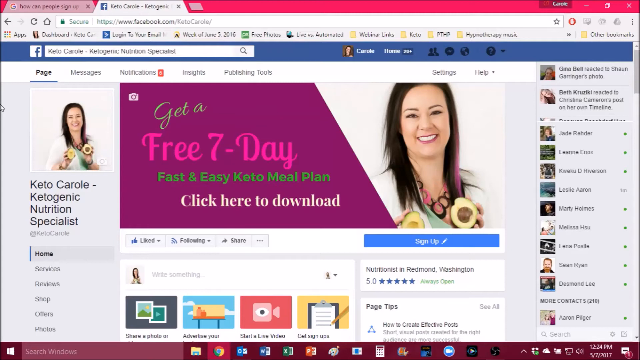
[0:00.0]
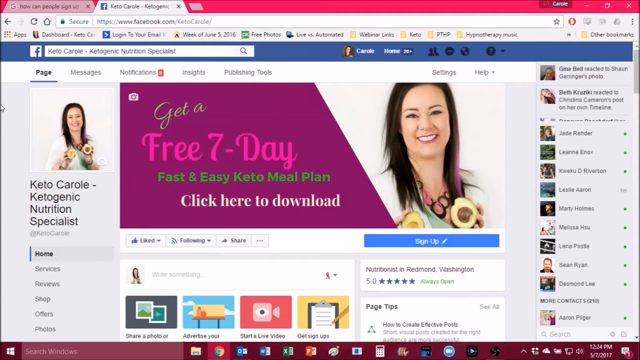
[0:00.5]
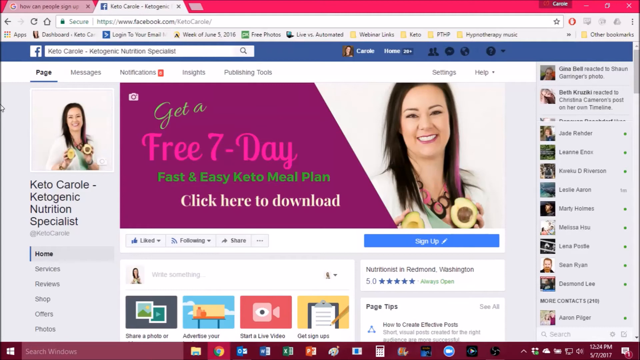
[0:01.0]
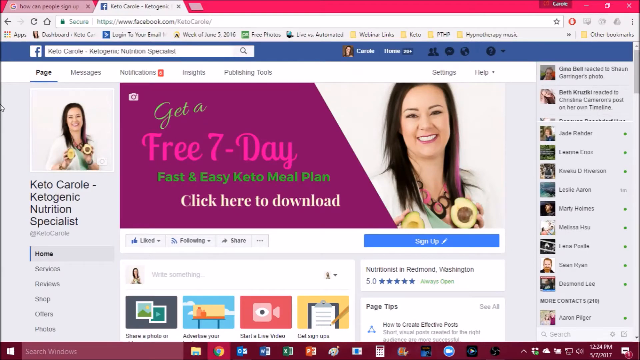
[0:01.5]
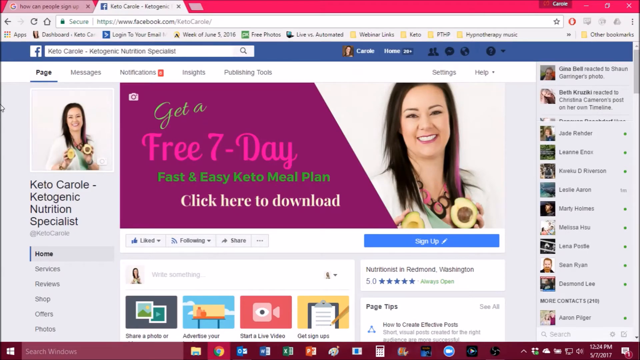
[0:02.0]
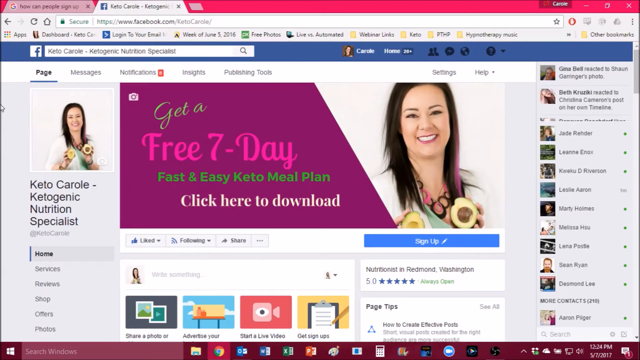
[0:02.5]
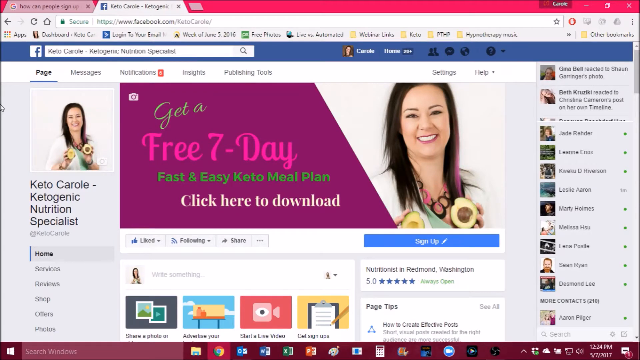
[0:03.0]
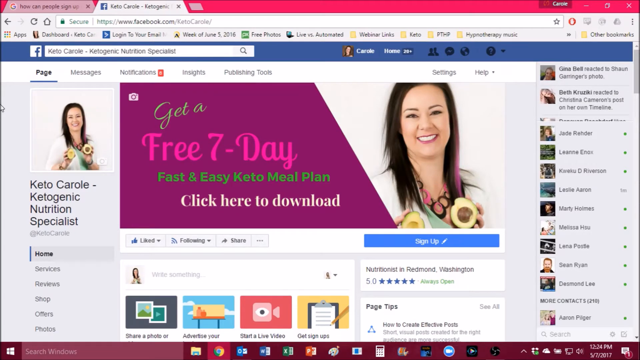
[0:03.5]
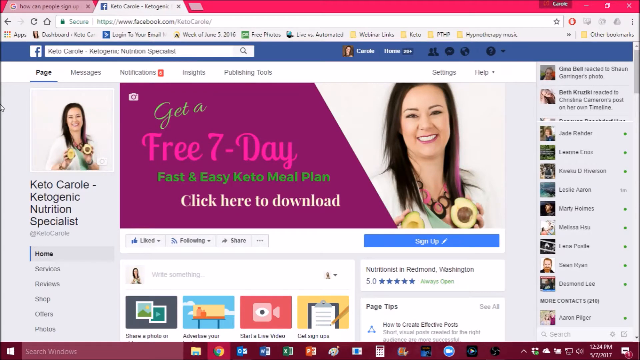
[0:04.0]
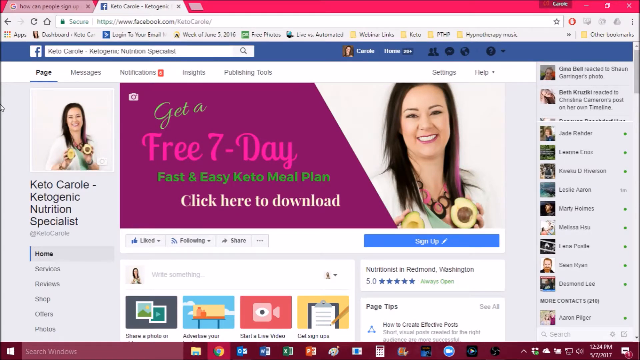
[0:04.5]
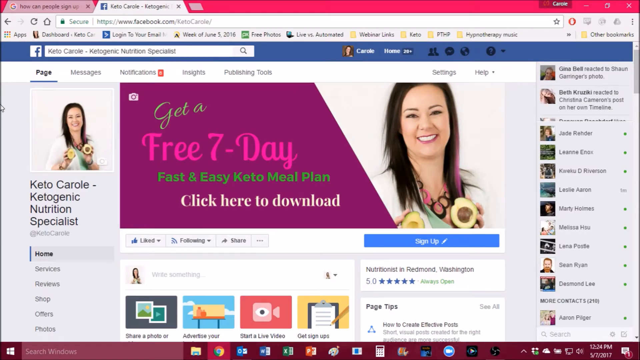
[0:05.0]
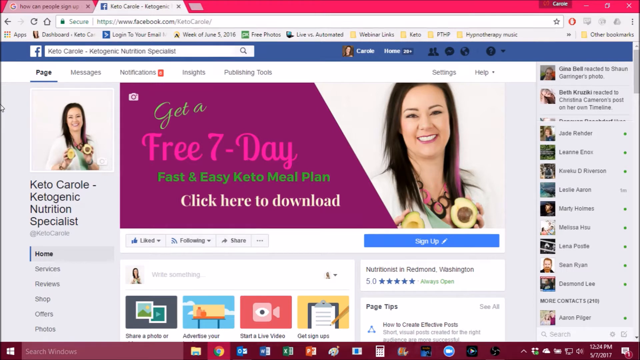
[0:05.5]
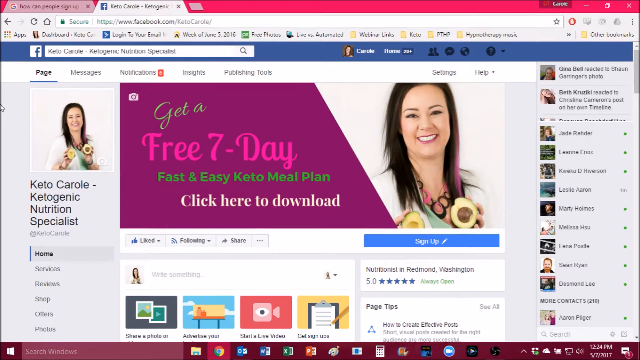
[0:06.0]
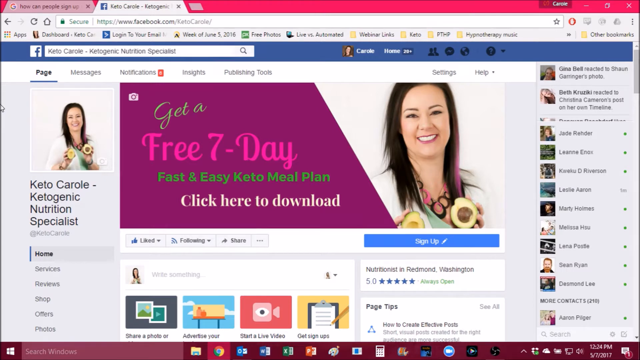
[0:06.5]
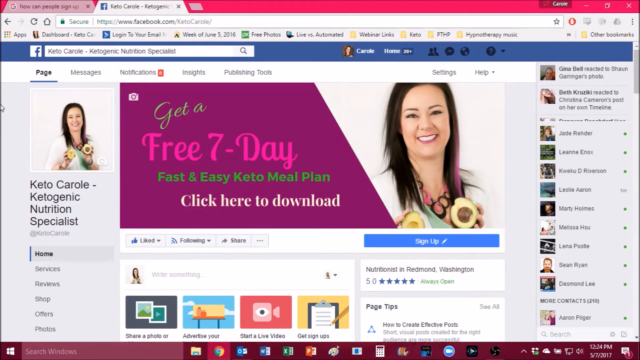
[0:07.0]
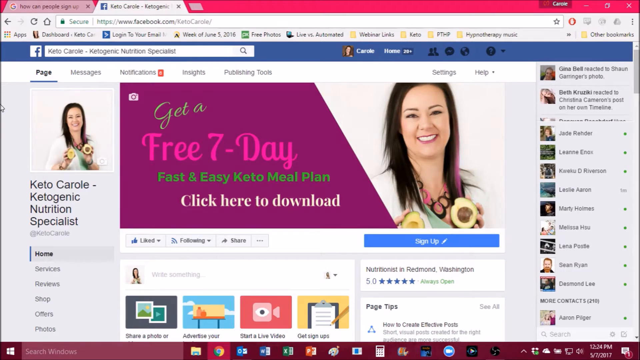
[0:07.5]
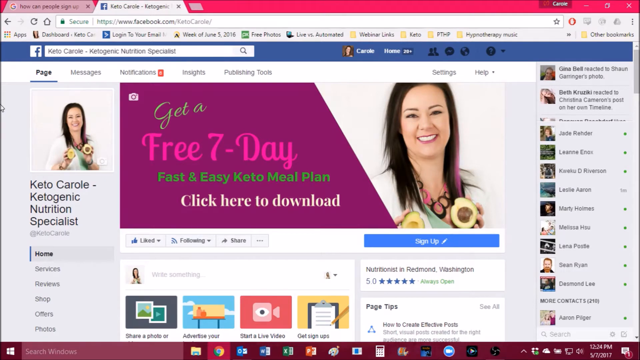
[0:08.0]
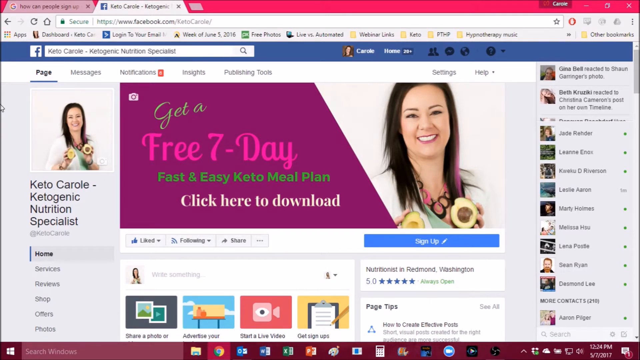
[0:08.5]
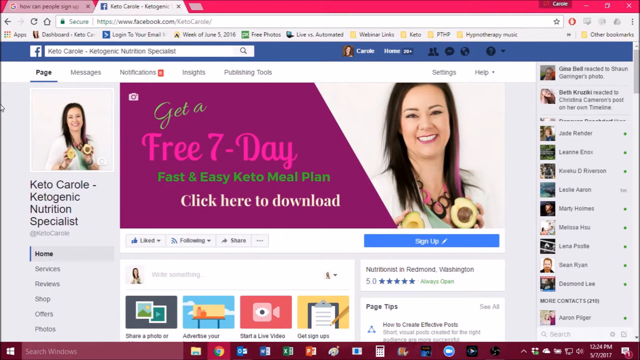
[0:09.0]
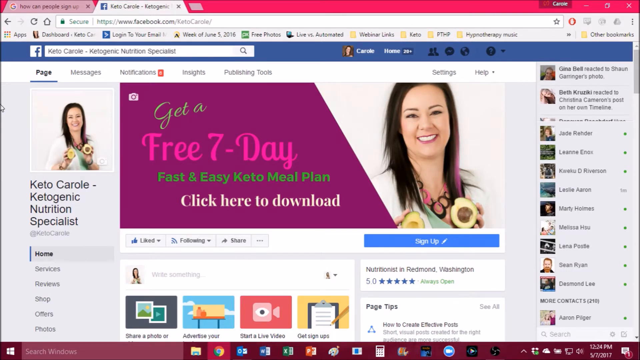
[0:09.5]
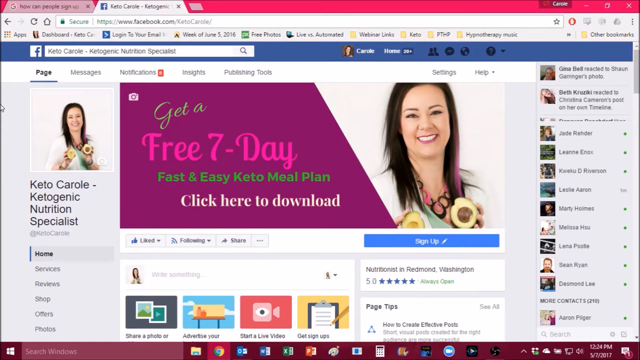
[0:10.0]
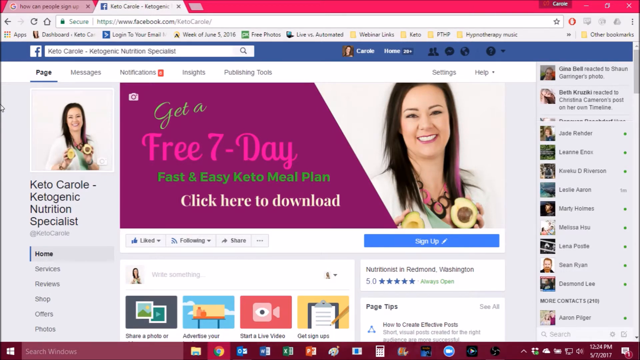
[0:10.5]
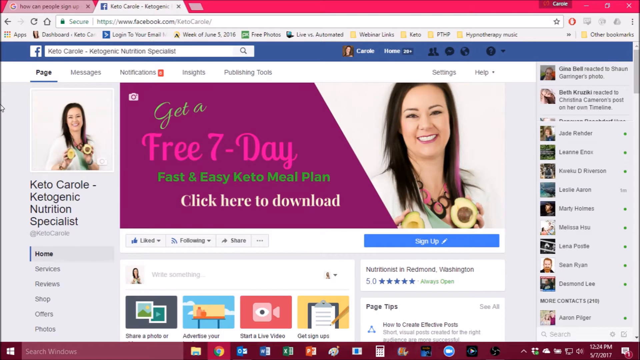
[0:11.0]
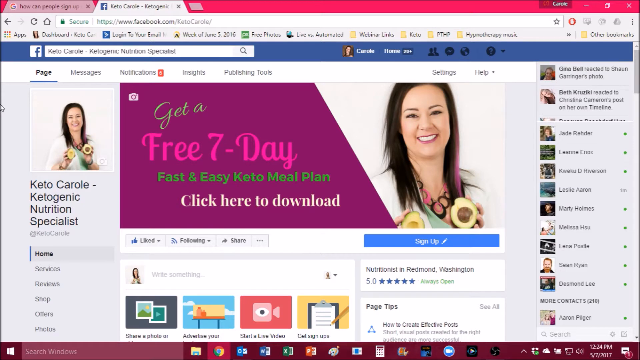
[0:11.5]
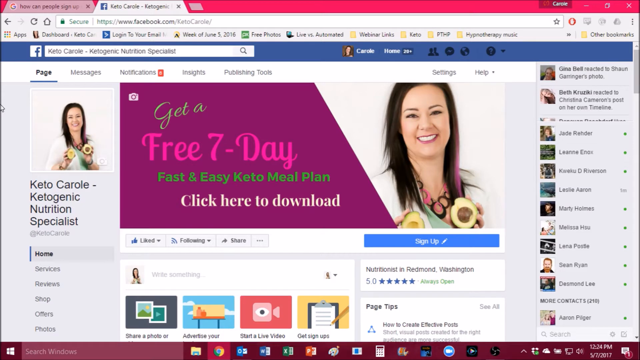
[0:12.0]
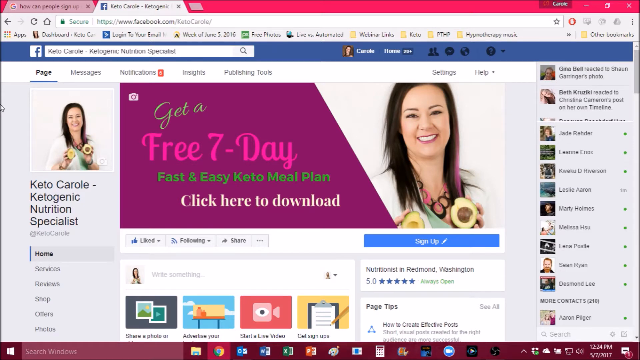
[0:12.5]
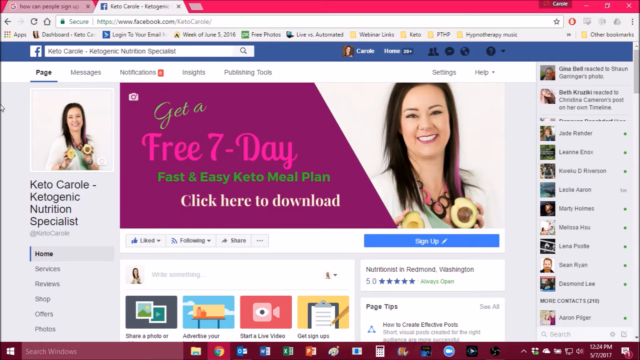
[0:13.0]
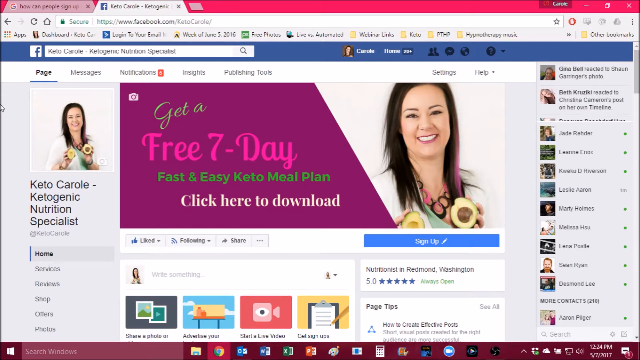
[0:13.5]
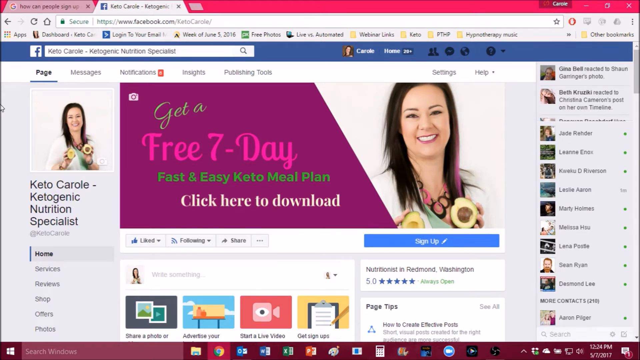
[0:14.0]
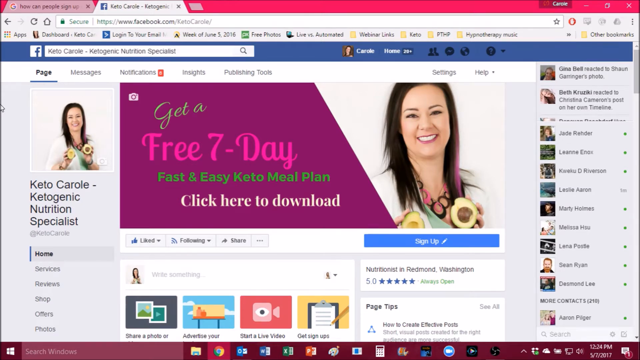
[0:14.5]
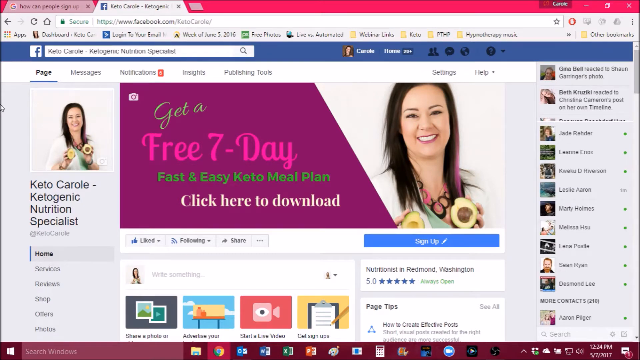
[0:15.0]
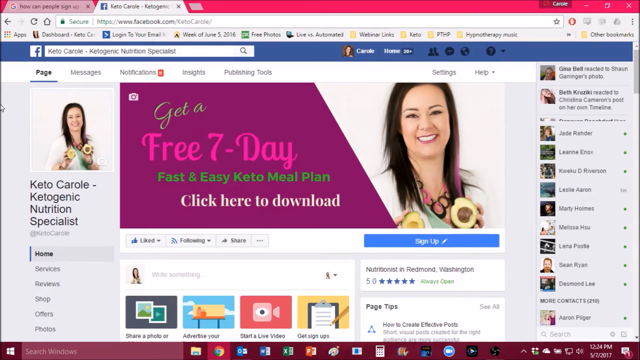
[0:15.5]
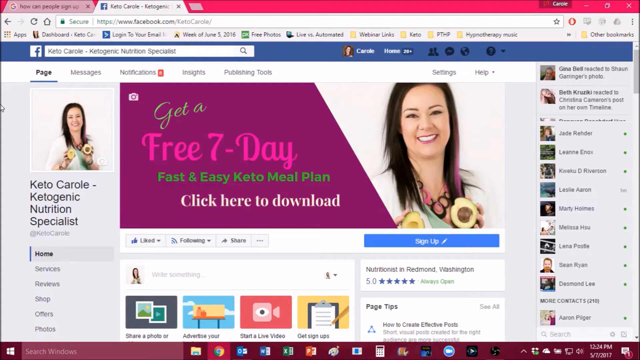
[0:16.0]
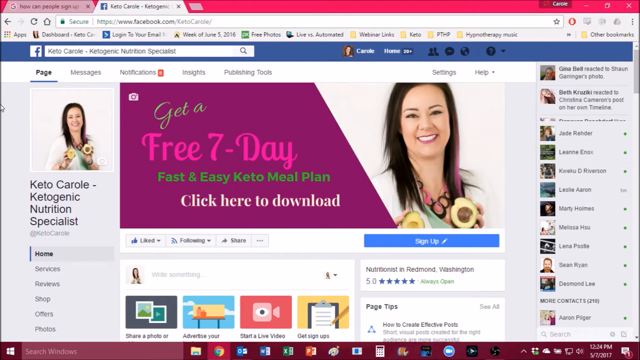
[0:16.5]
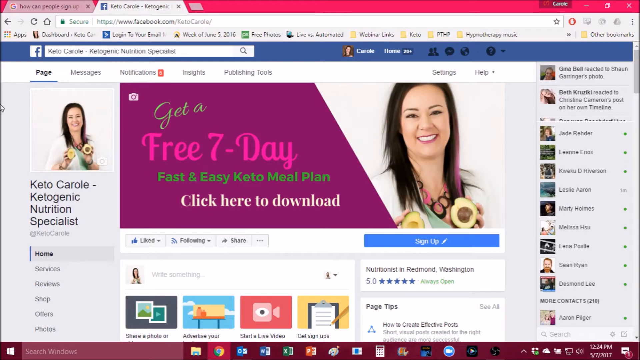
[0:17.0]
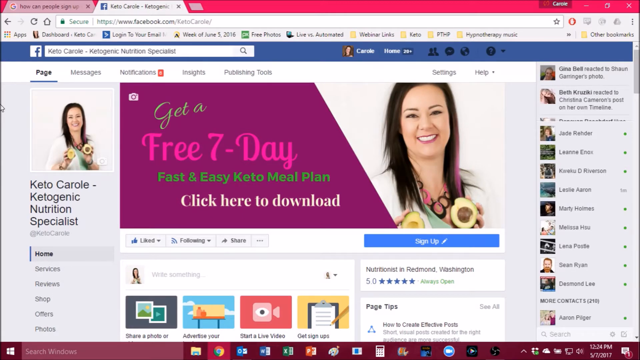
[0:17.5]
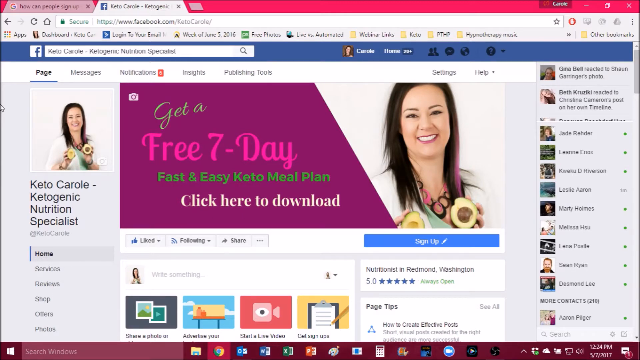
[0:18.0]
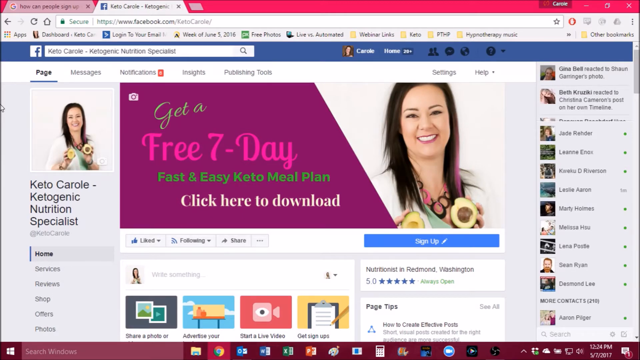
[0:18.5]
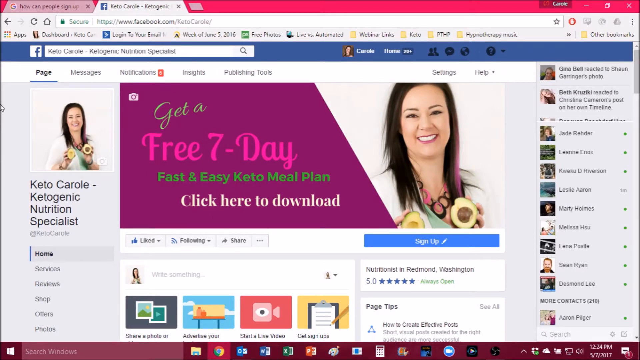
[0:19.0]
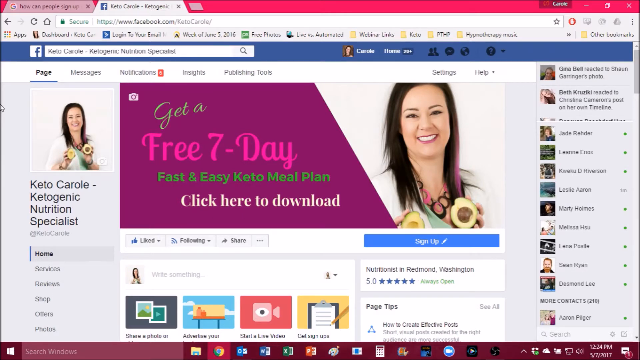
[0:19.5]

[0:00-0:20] What looks like a screen capture of a web browser shows a Facebook page titled "Get a 7 Day Free Fast and Easy Keto Meal Plan. Click here to download." Nothing moves on the screen; it seems to be a static recording of the top of the web page, which appears to be about keto-friendly meals and meal planning. The sign up button, the like button, following and share are visible. Under the smaller photo on the left of the page is another name, "Keto Carol, Ketogenic Nutrition Specialist," and under that are home, services, reviews and shop. The page seems to be the home Facebook page of a keto diet influencer.